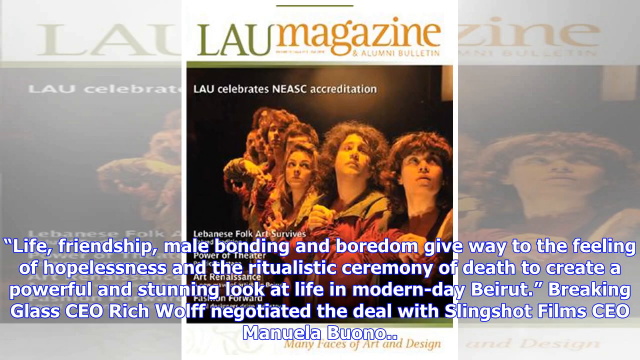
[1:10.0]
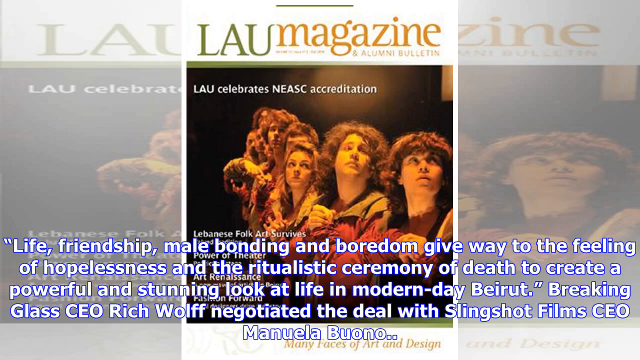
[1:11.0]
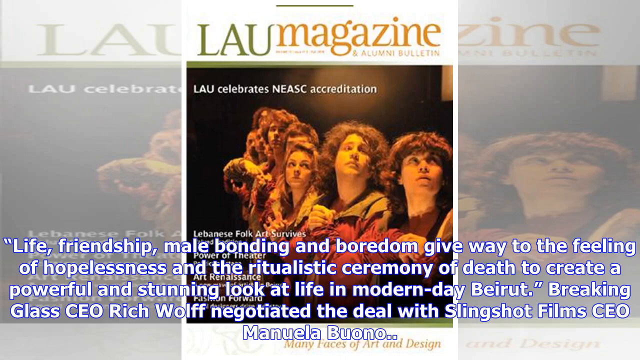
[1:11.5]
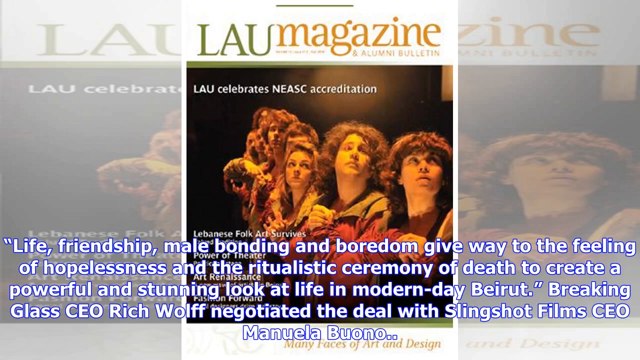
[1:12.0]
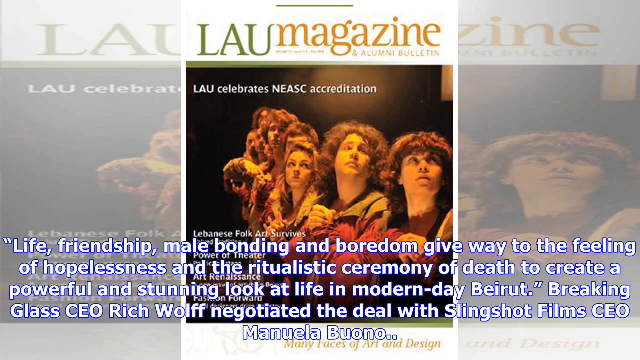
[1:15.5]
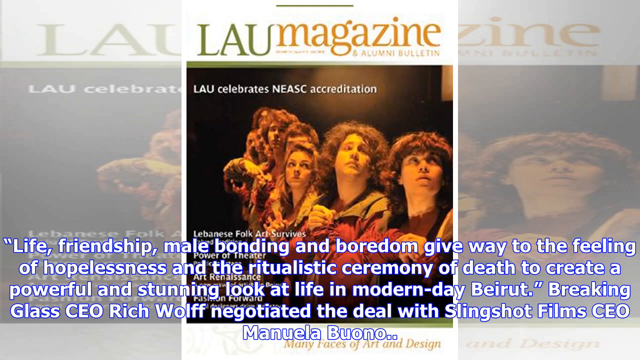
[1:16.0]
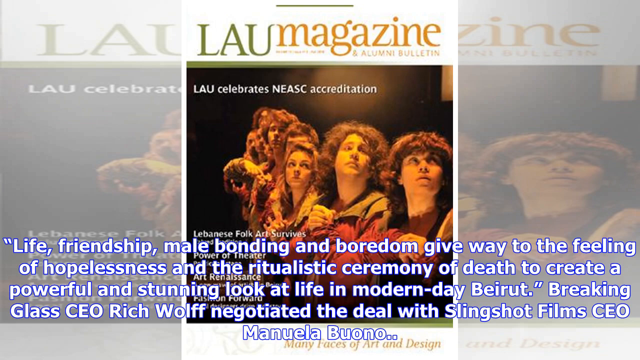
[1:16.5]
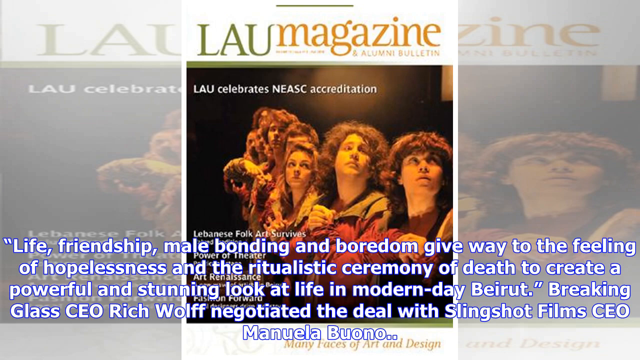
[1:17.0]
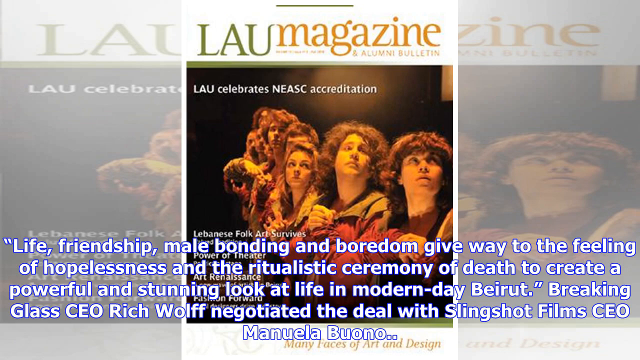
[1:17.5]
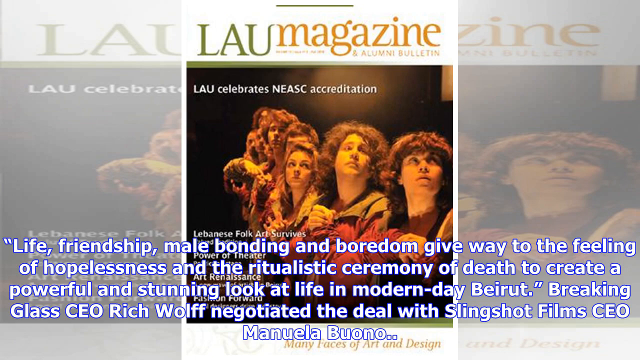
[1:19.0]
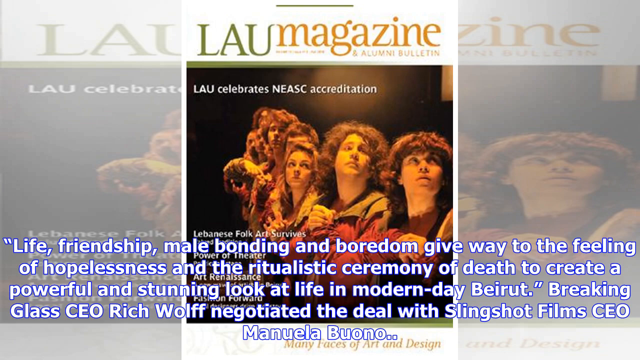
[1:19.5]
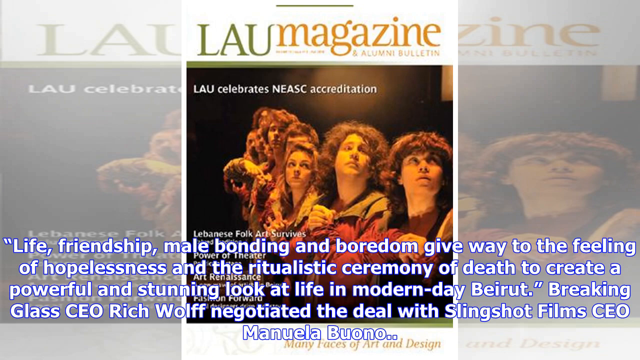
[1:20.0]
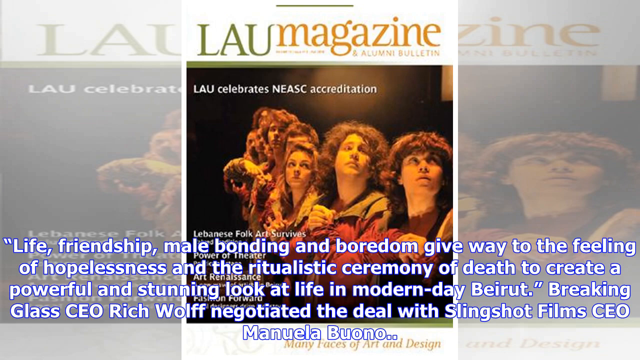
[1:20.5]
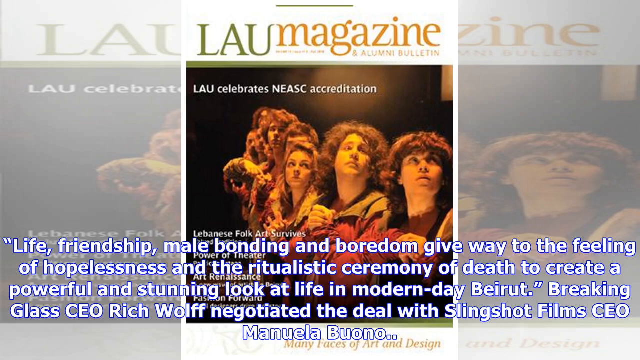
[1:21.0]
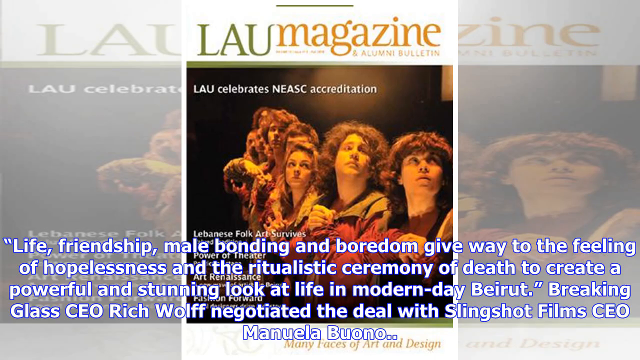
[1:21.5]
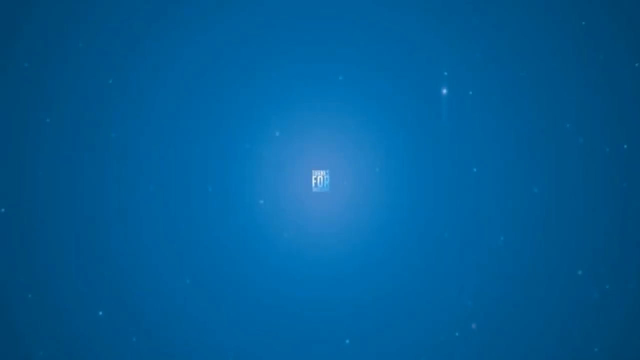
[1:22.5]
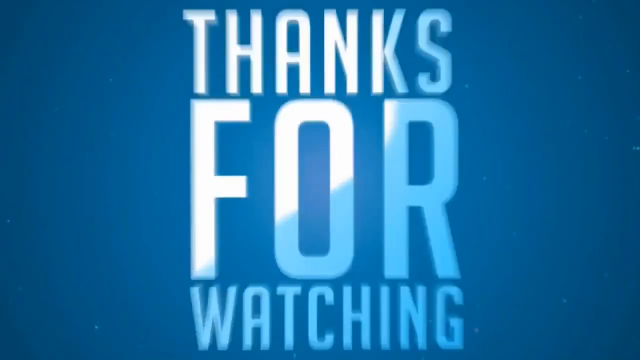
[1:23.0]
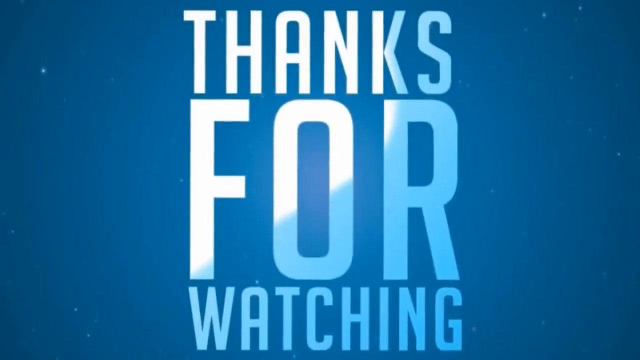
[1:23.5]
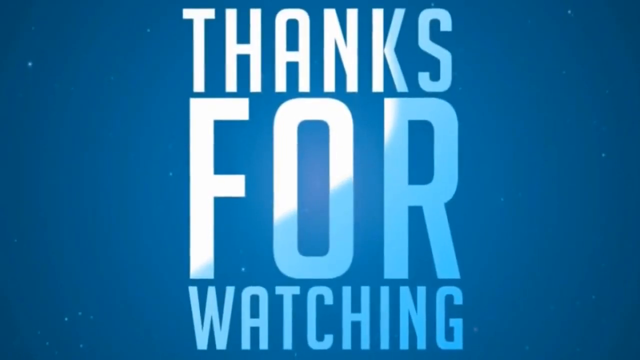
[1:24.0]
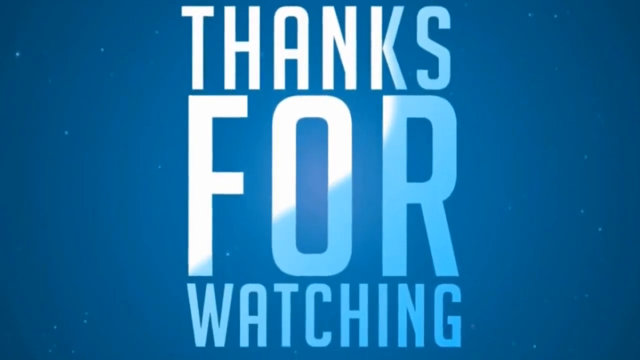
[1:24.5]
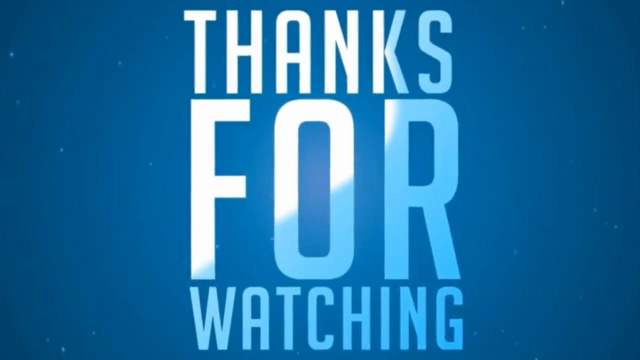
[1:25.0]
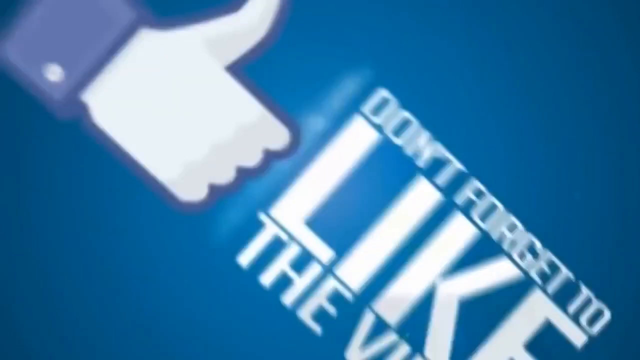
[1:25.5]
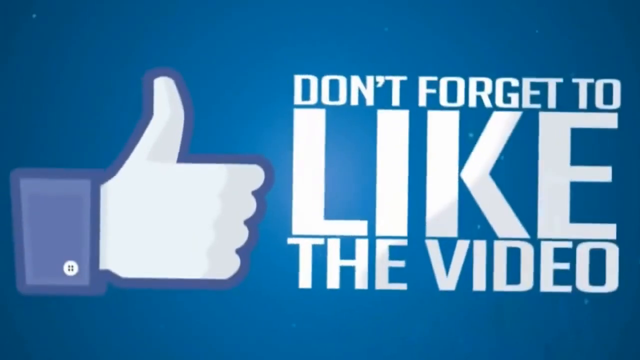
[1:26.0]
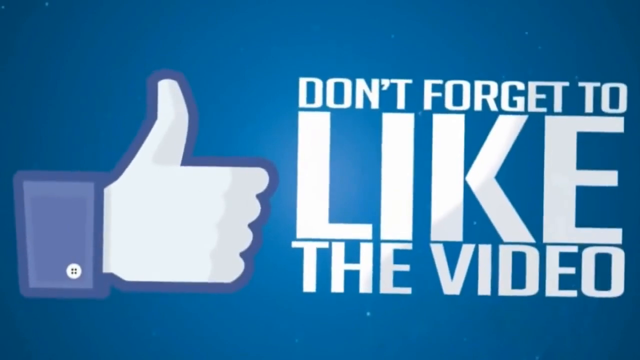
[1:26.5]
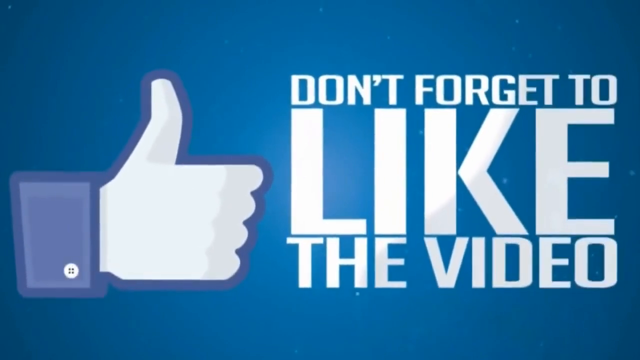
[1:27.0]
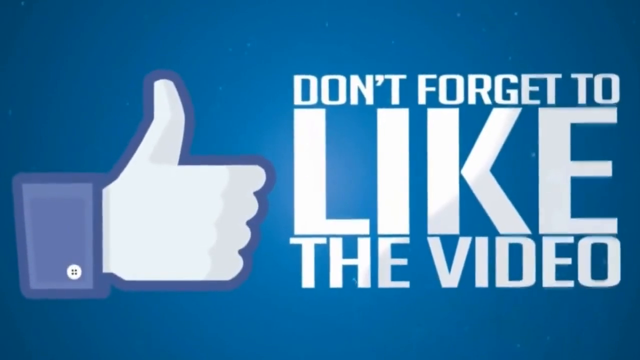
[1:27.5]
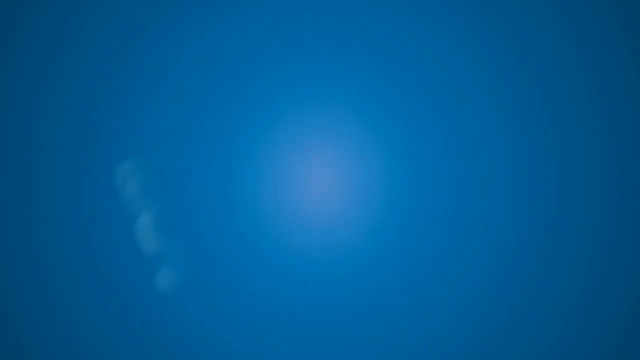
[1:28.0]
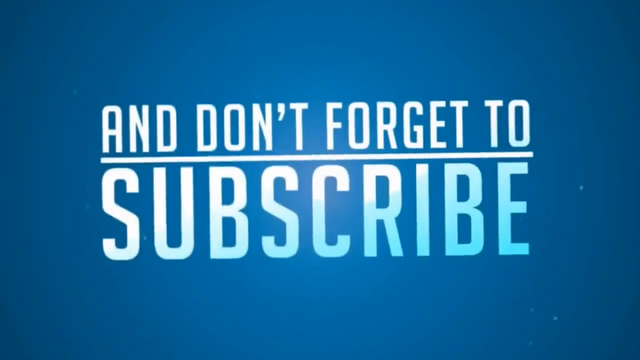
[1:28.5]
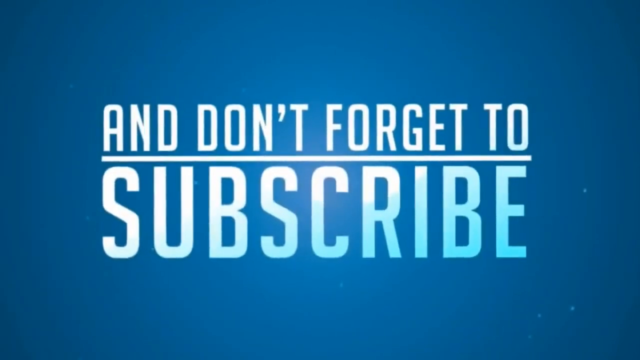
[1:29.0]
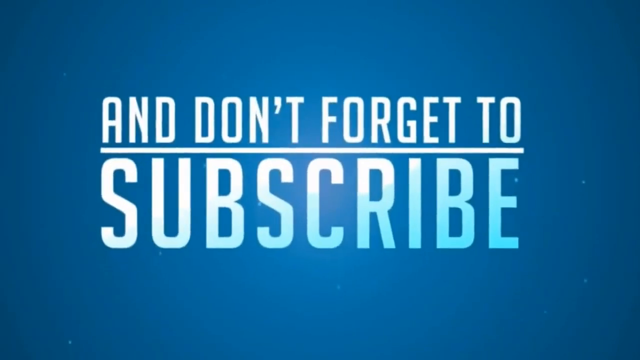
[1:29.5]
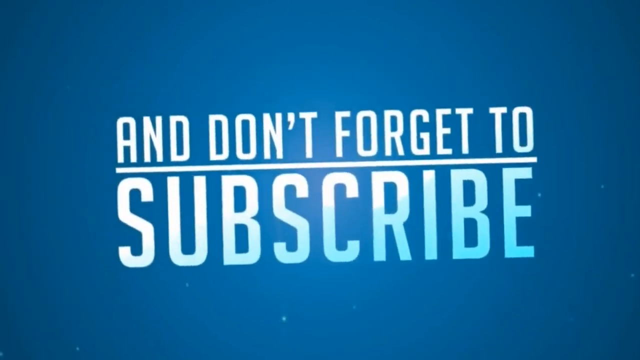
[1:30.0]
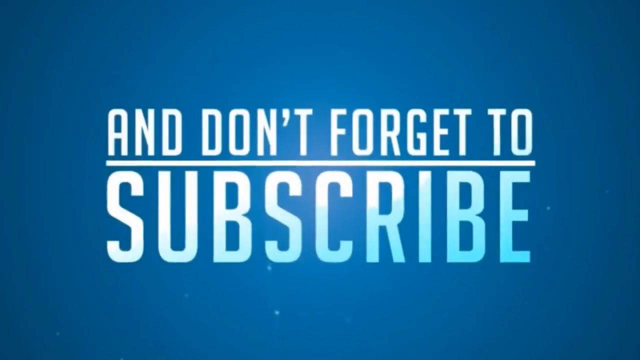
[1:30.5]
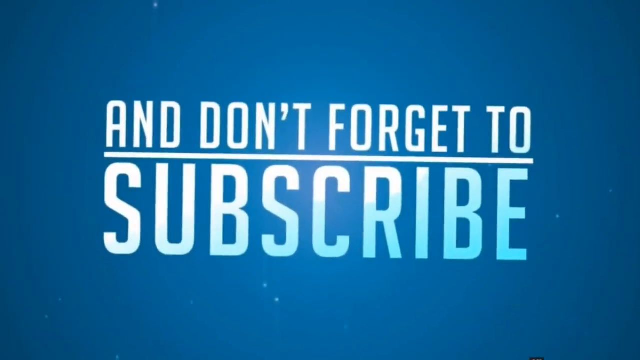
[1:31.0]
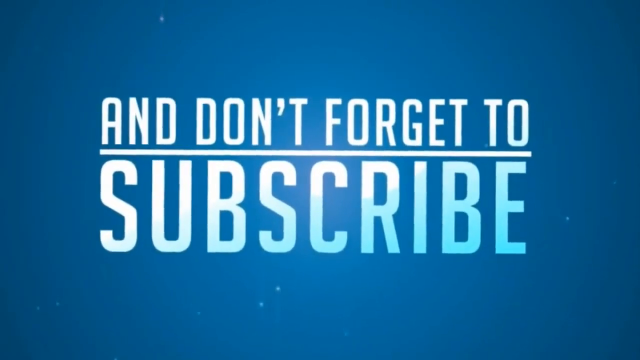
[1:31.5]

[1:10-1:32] A magazine labeled "LAU magazine, an alumni bulletin" is displayed, with "LAU celebrates" on it and many people on the front cover looking upwards. Text at the bottom reads: "life, friendship, male bonding and boredom give way to the feeling of hopelessness and the ritualistic ceremony of death to create a powerful and stunning look at life in modern-day Beirut. Breaking Glass CEO Rich Wolf negotiated the deal with Slingshot Film CEO." The video cuts to an animated screen with a blue background, and the text "thanks for watching" pops onto the screen in large lettering that takes up the majority of the screen. It then transitions to a screen that says "don't forget to like the video" in large white text, with a Facebook thumbs up to the left of it. It then cuts to "and don't forget to subscribe."